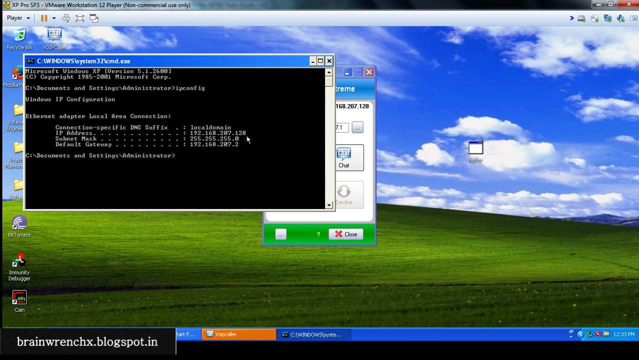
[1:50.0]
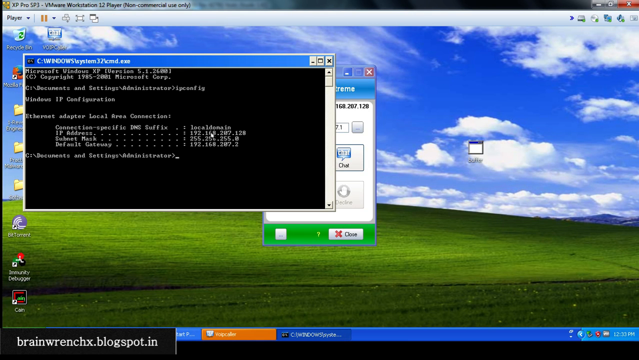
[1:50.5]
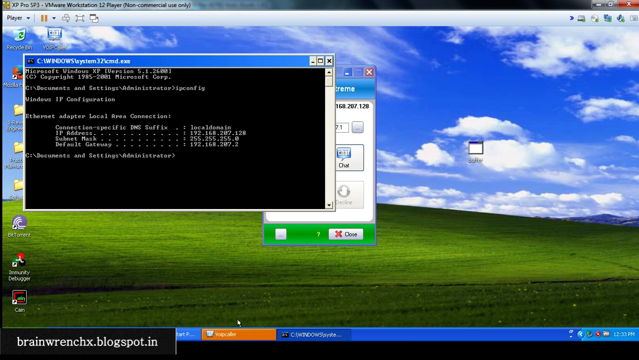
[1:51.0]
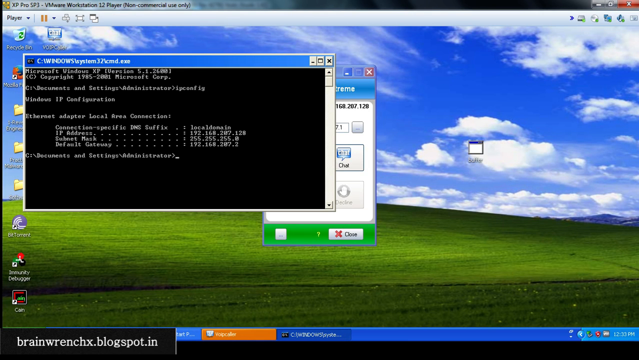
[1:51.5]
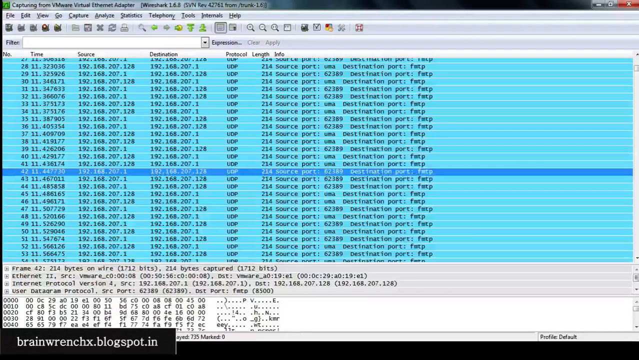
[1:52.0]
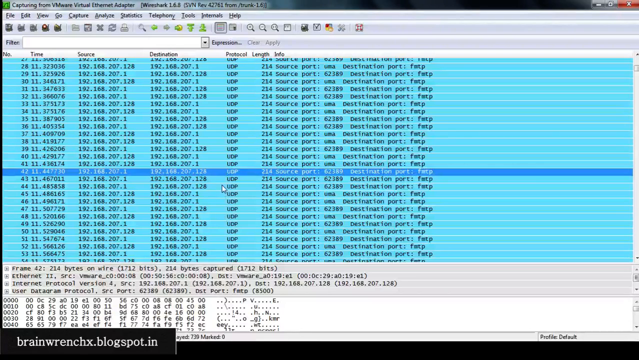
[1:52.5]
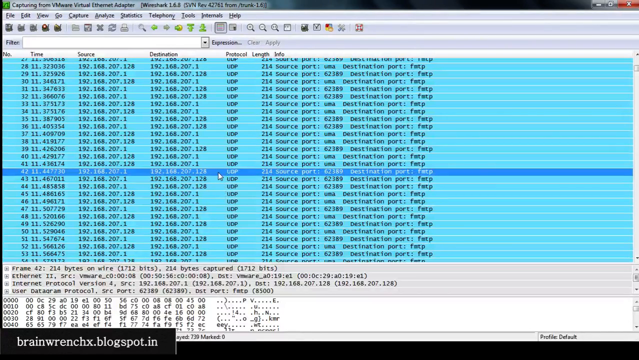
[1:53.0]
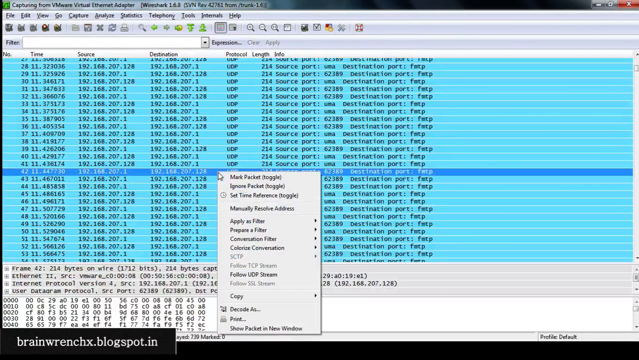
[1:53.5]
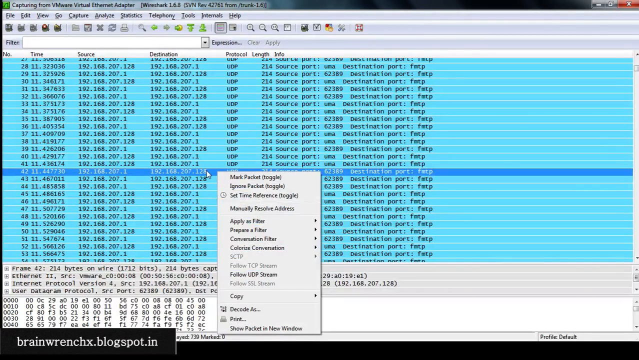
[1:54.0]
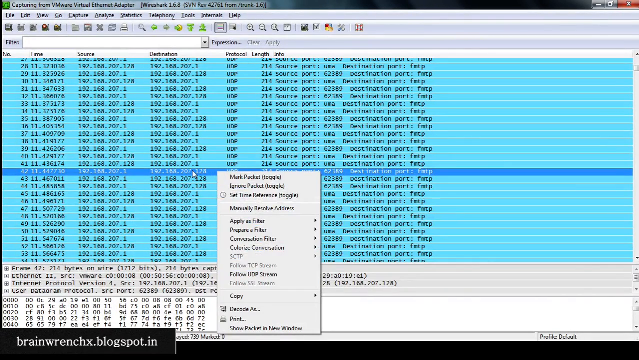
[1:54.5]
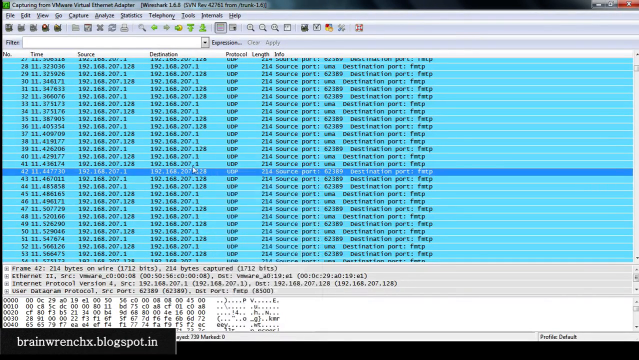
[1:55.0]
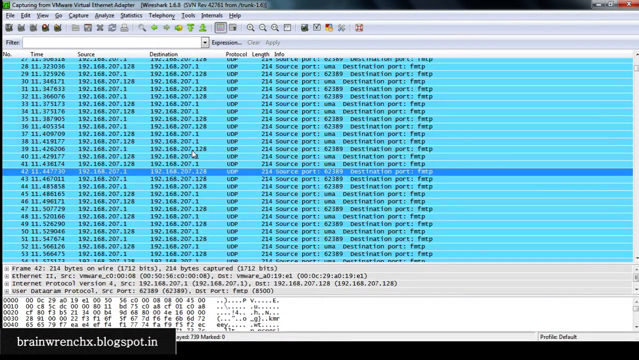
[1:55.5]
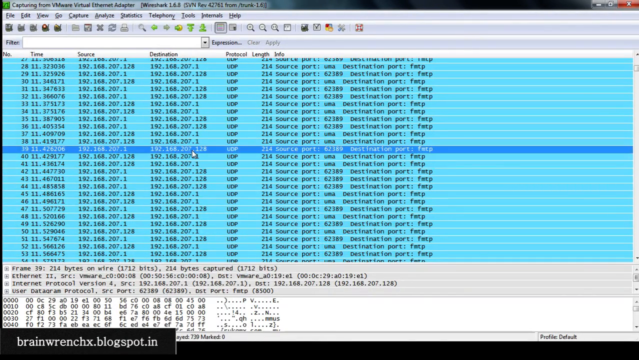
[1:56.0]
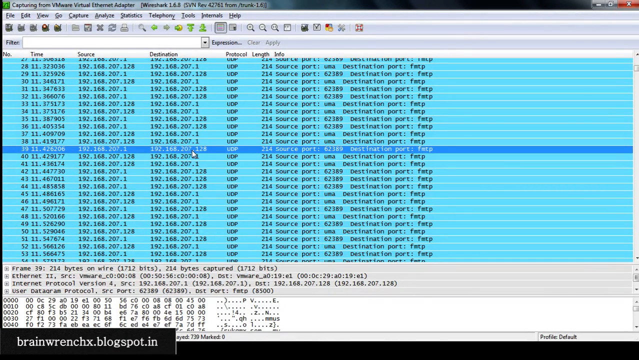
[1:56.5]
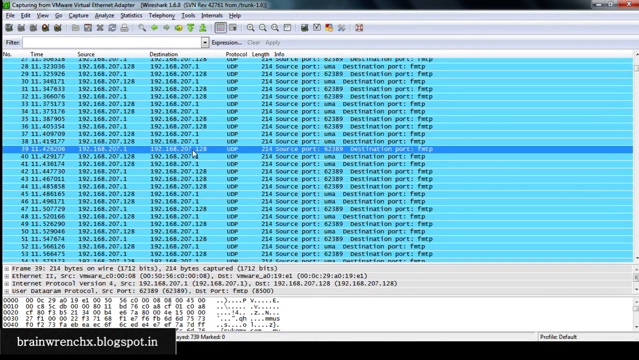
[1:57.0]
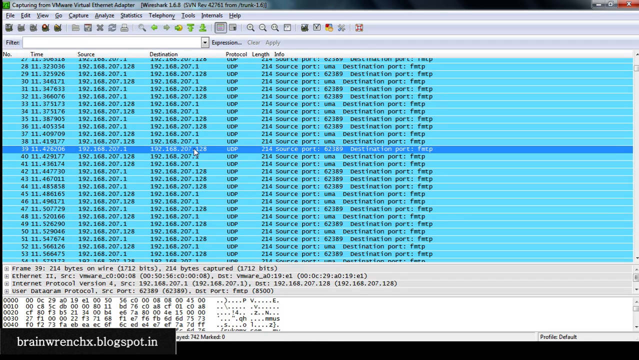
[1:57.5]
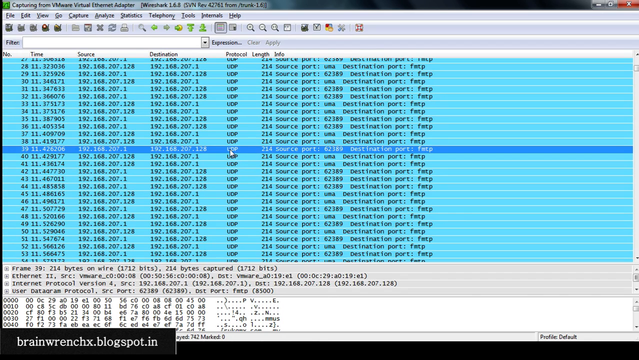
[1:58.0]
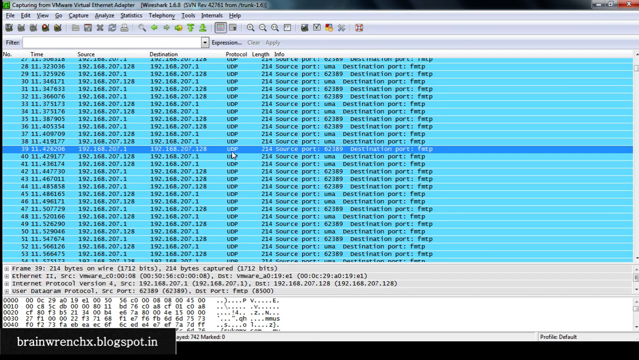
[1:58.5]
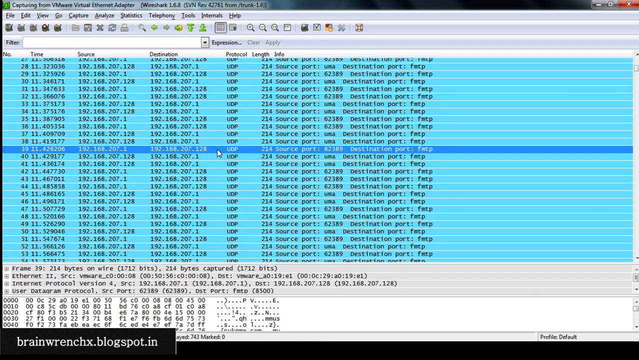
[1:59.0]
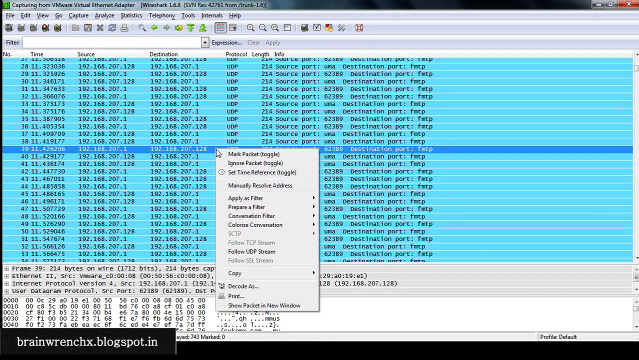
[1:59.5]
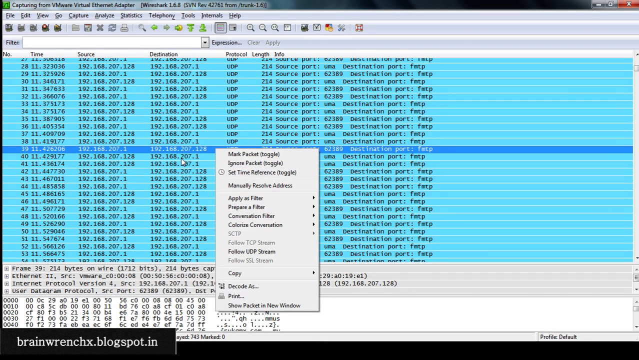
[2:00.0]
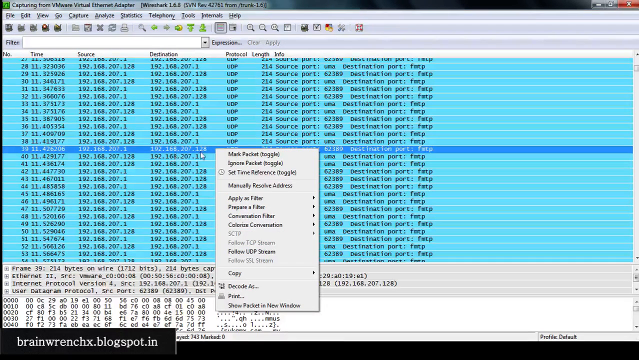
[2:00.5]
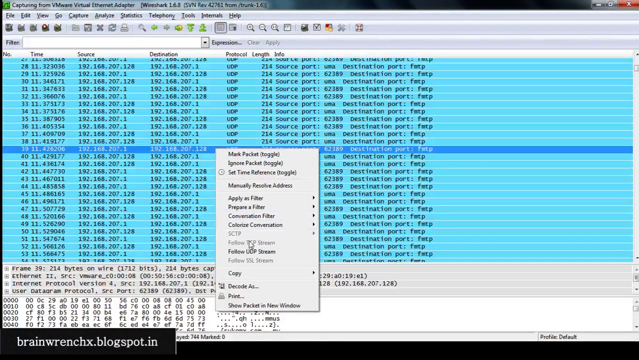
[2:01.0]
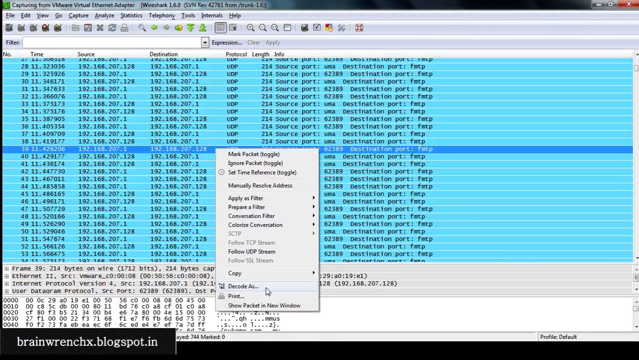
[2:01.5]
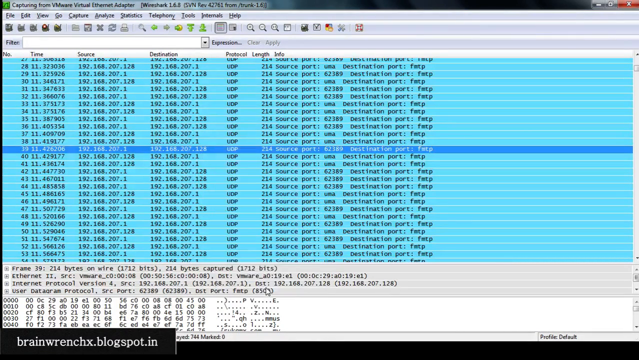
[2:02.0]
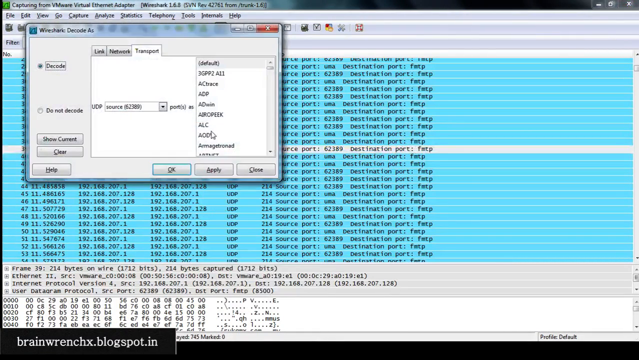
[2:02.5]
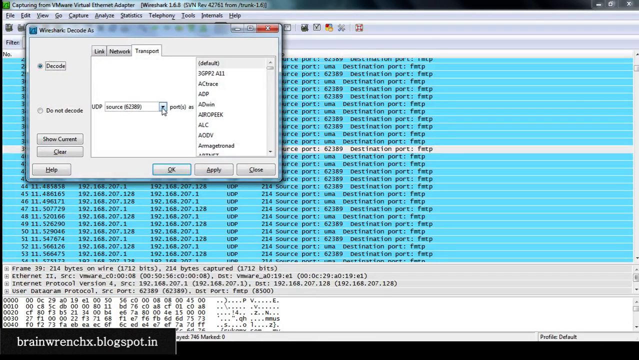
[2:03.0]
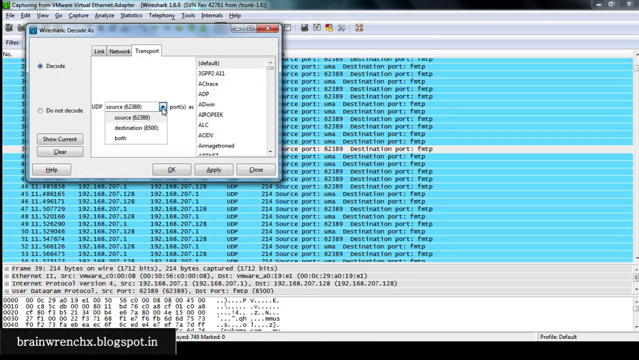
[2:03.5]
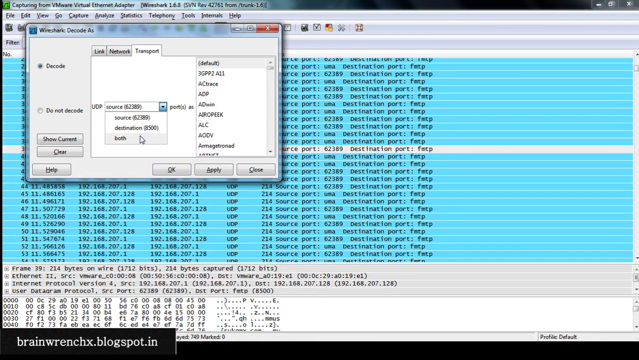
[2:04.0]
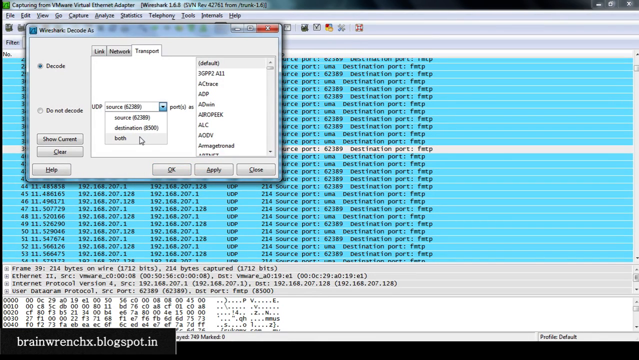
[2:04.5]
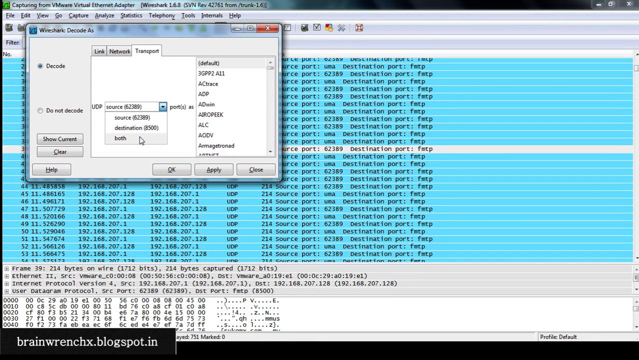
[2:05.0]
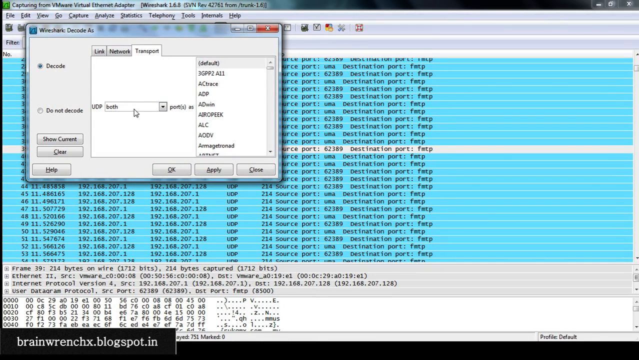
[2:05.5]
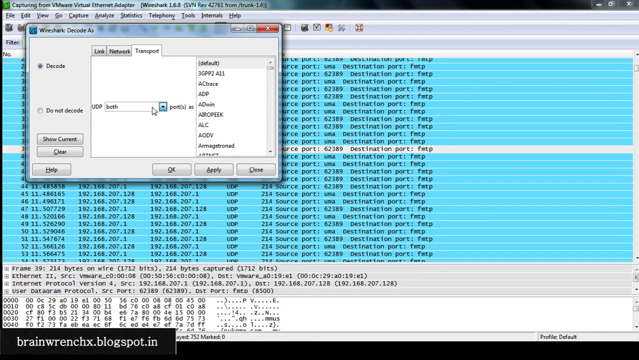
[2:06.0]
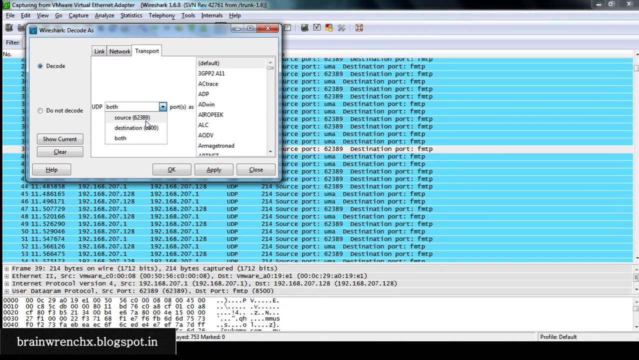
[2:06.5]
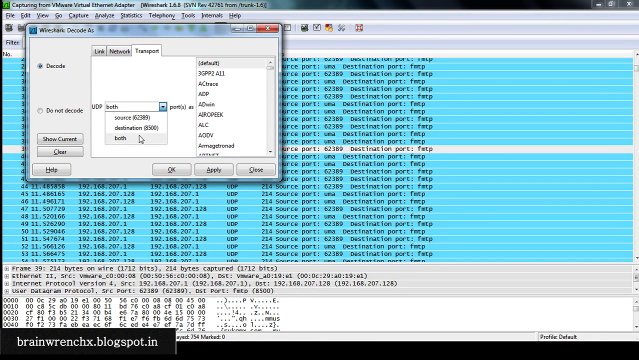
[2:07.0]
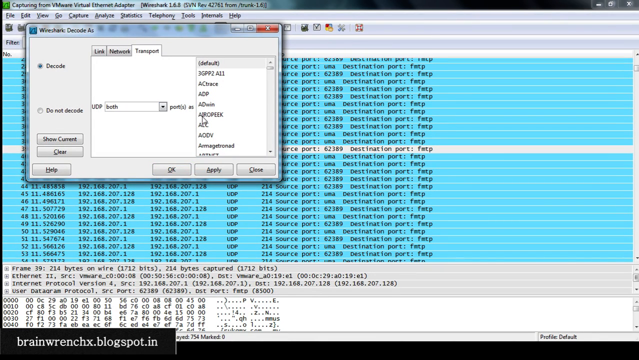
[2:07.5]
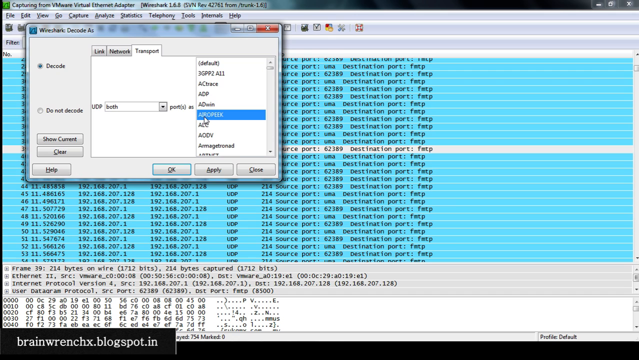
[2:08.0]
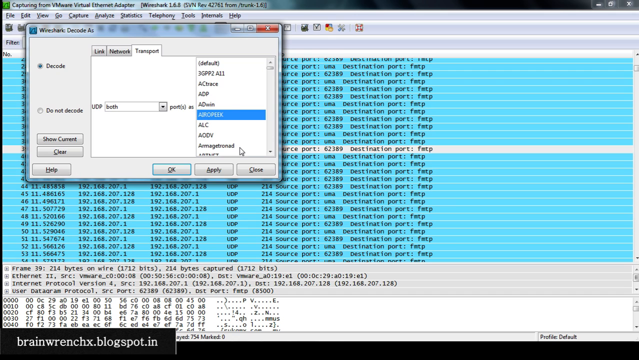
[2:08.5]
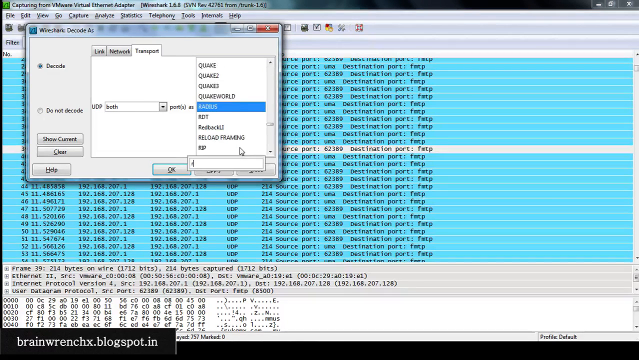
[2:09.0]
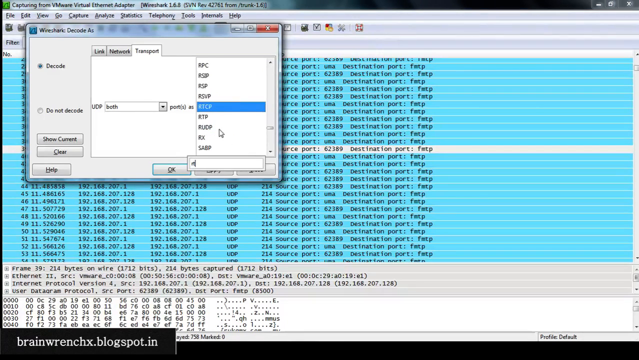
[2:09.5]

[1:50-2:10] Someone goes through a long list of color-coded IP addresses, possibly configuring the VoIP calling app VoIP Caller Extreme on Windows XP. The screen shows a whole bunch of IP addresses.